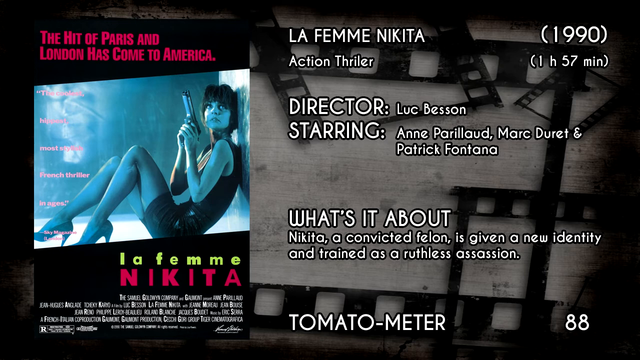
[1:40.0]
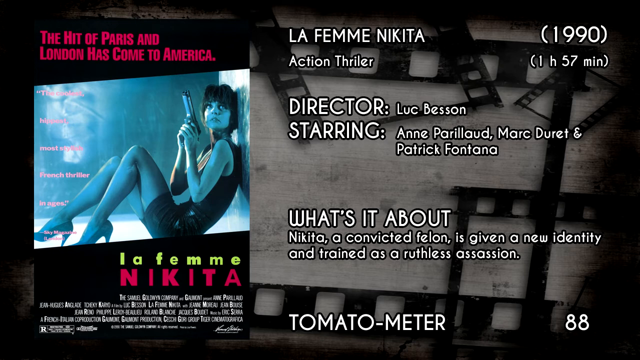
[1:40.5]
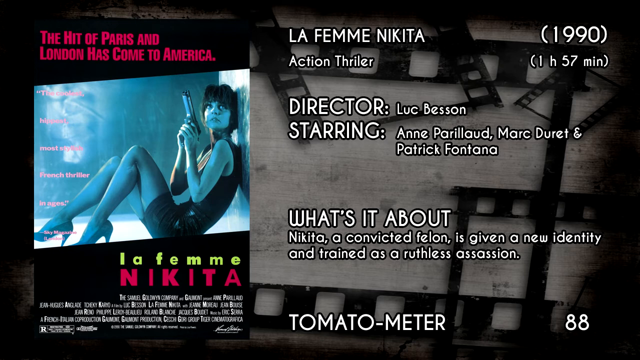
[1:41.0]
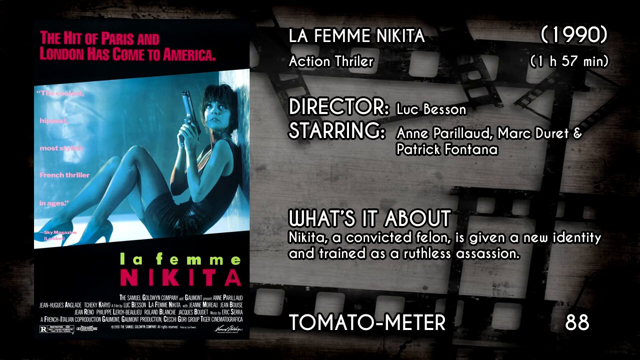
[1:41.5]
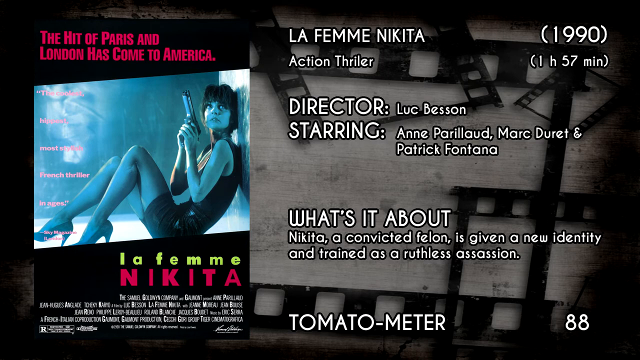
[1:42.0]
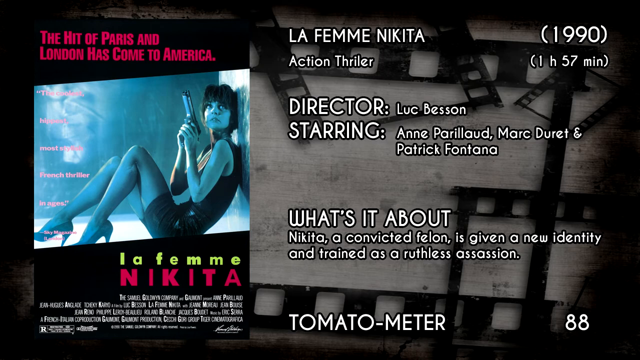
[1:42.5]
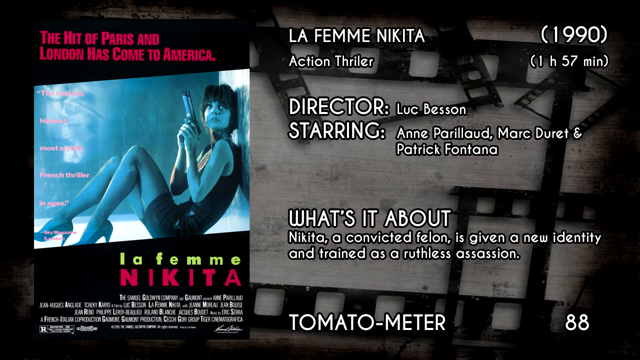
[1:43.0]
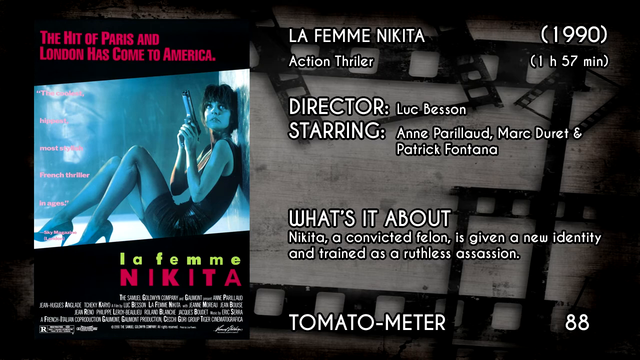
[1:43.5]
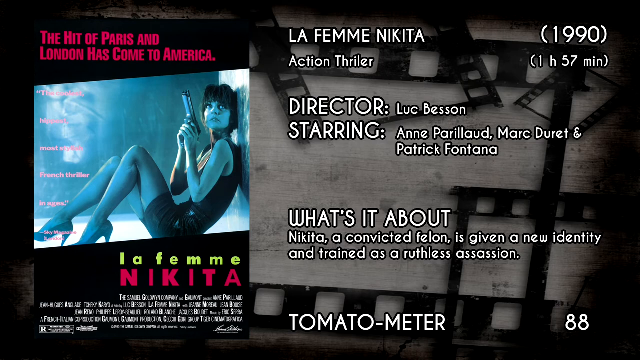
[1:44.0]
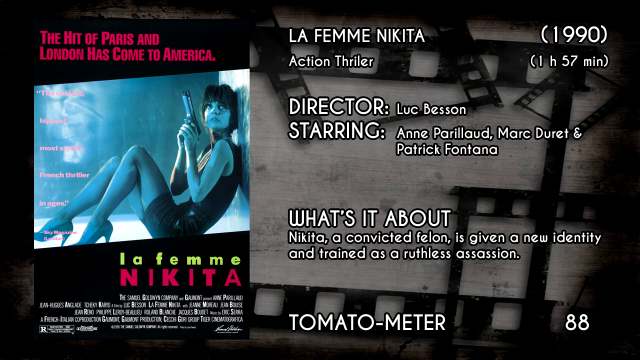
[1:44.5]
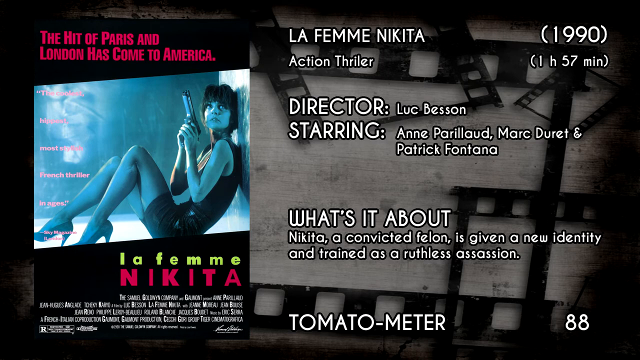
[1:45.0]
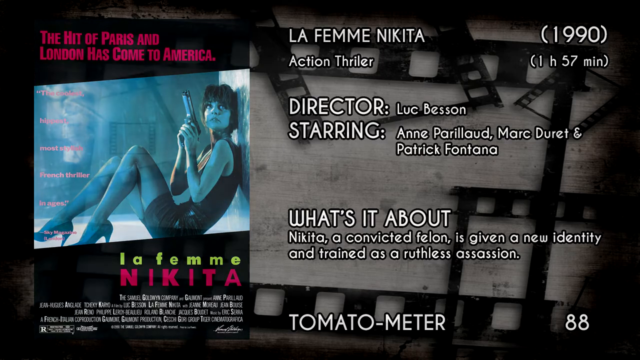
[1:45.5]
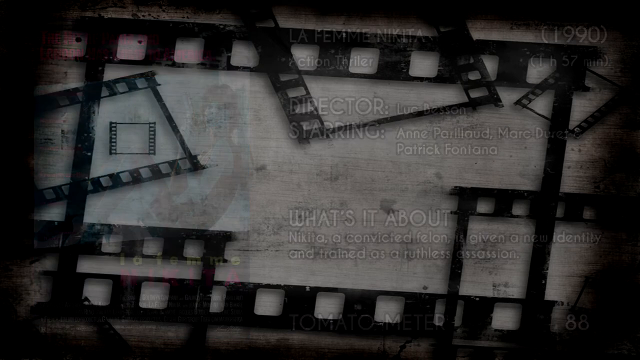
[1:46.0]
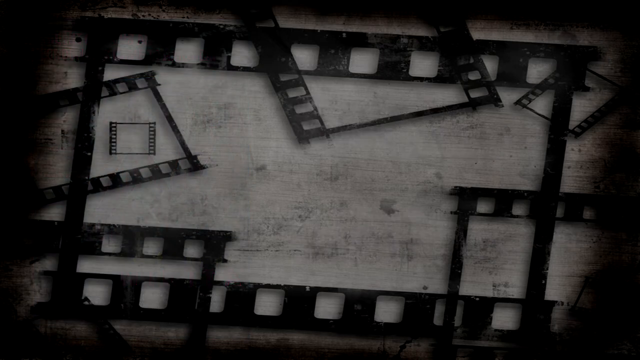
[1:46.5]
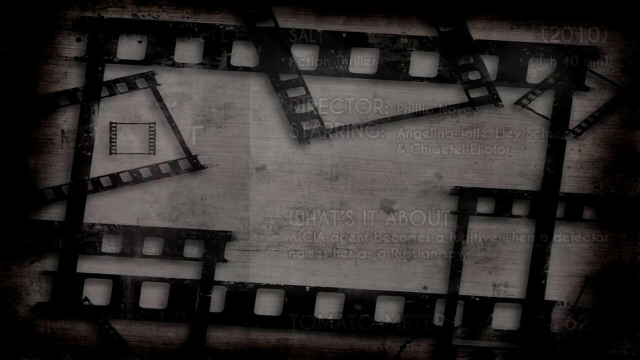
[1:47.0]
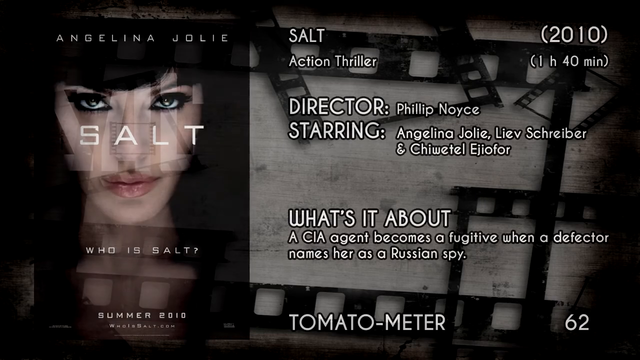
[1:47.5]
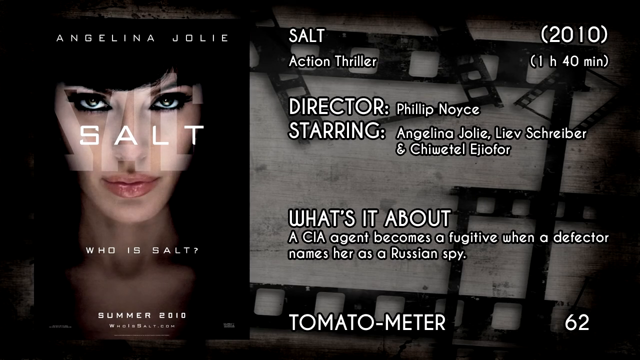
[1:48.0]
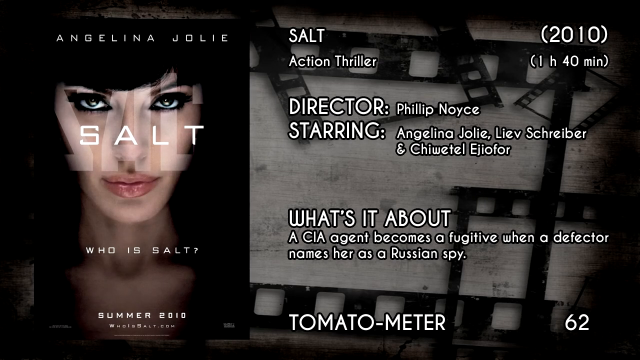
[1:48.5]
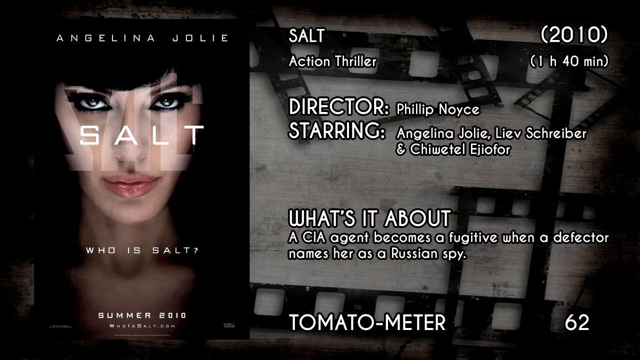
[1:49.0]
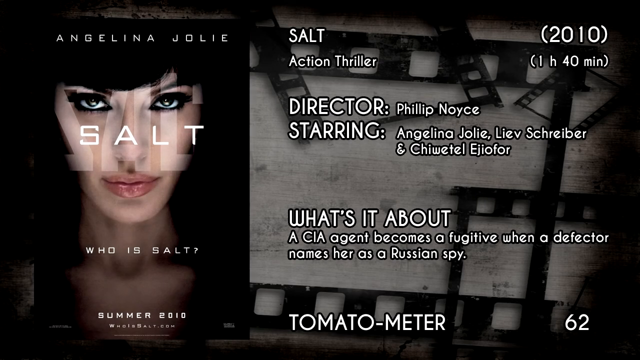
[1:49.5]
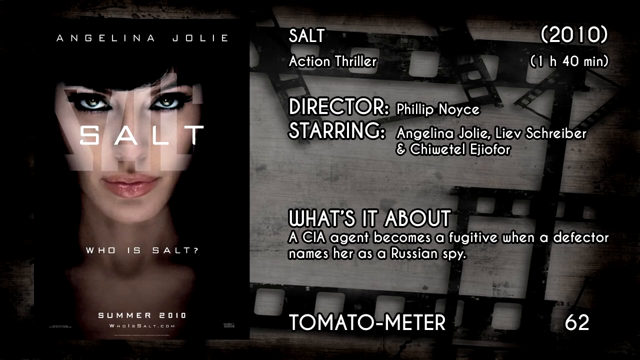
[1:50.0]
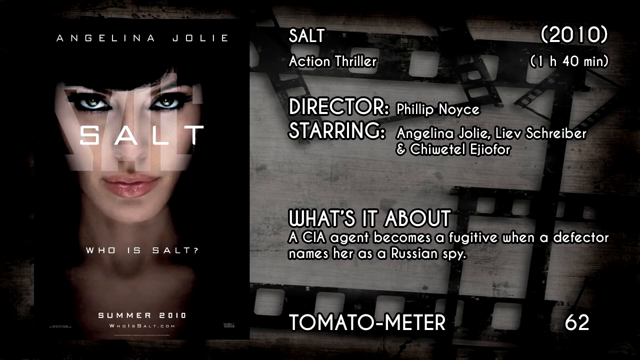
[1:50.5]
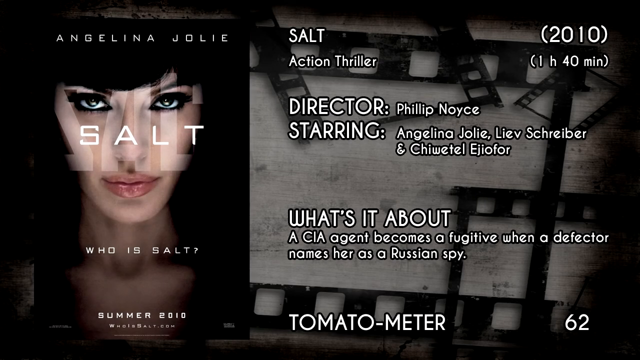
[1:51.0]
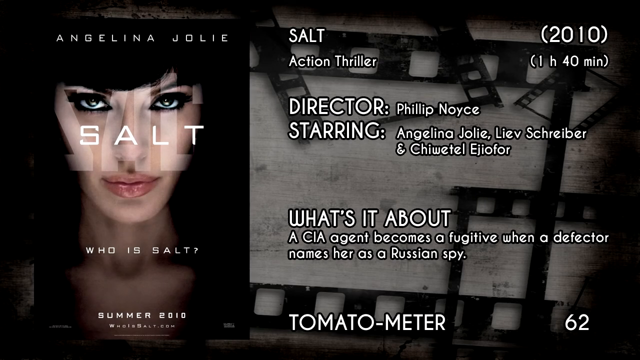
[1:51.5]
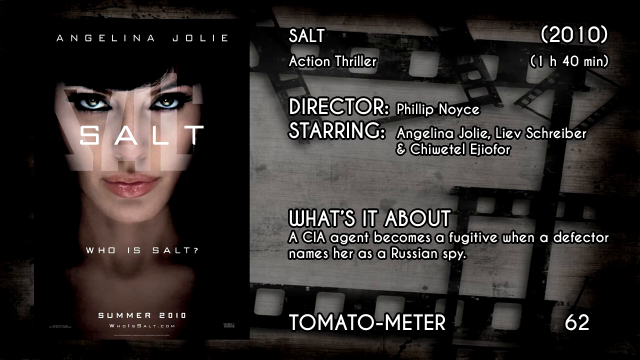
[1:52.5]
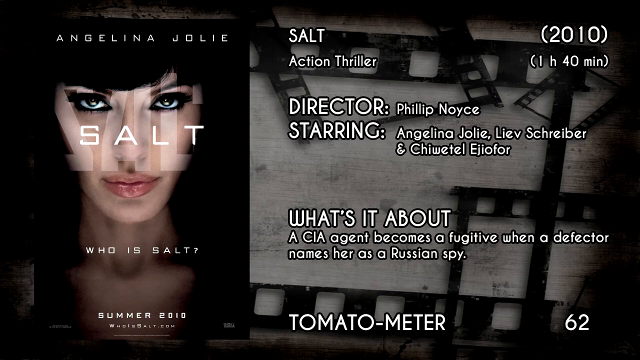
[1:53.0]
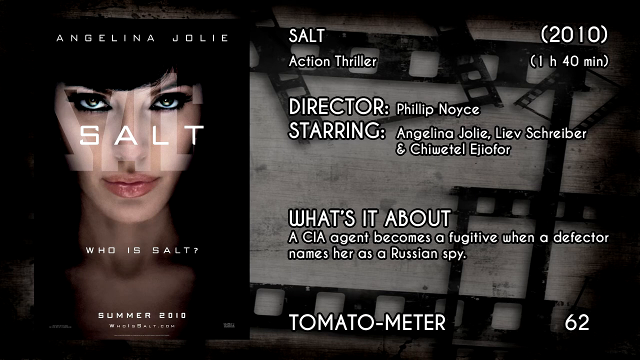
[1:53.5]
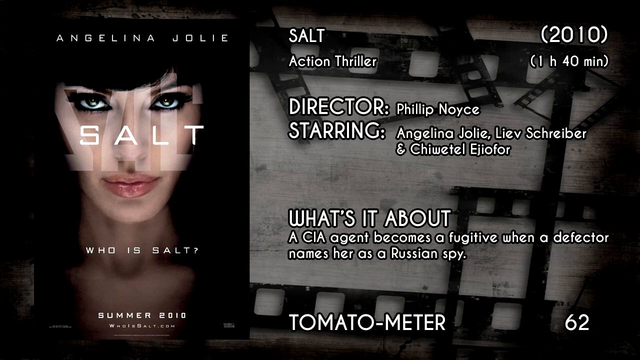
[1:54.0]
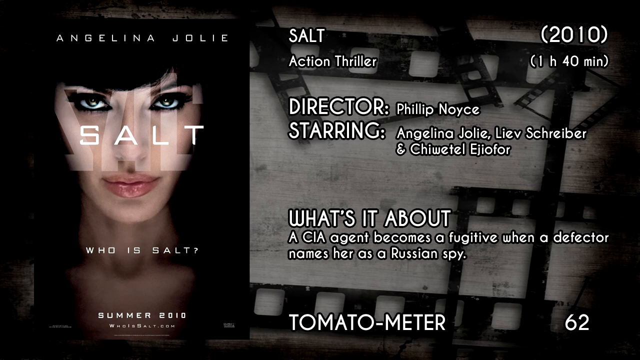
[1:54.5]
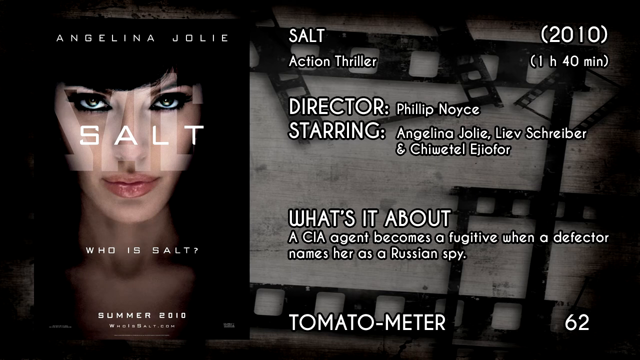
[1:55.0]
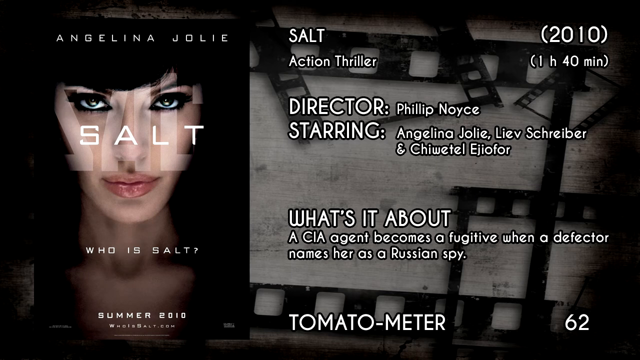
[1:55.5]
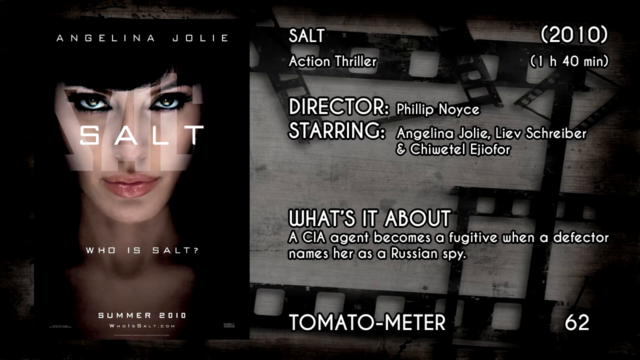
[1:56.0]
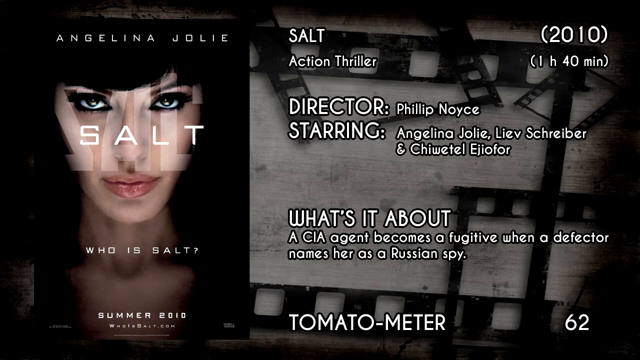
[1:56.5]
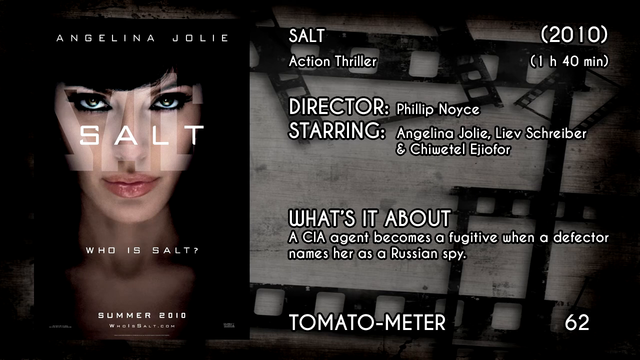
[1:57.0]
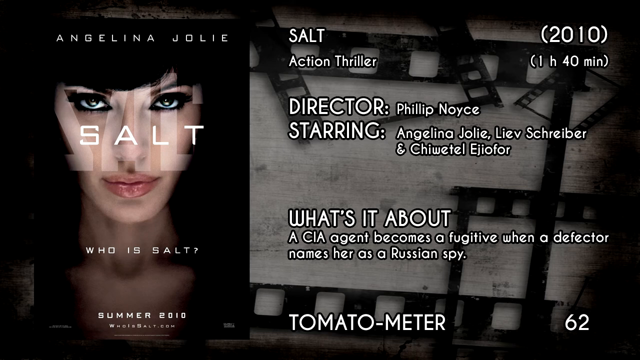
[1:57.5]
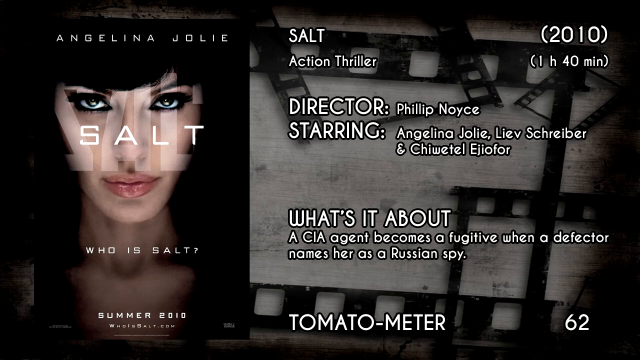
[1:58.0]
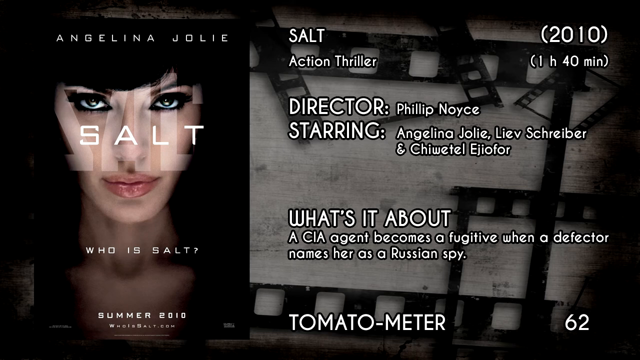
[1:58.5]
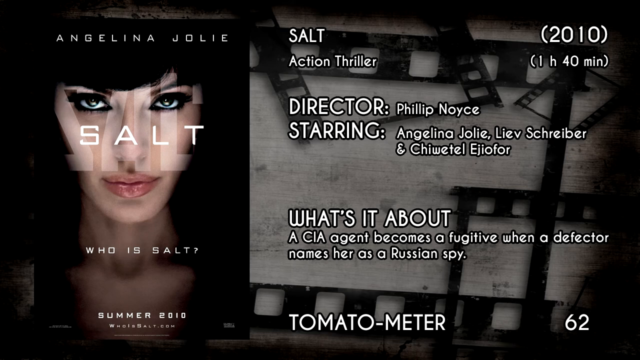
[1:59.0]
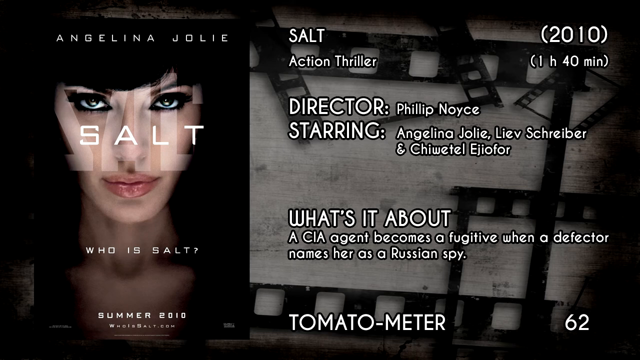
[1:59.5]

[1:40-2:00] The Le Femme Nikita page stays up for a little while, then a new movie appears: Salt, action thriller, 2010, 1 hour 40 minutes, director Philip Noyce, starring Angelina Jolie, Leah Schreiber and Shiwetel Ejuofor. The synopsis describes an agent who becomes a fugitive when a defector names her as a Russian spy. The Tomato Meter rating is 62. The poster on the left shows Angelina Jolie's name at the top and her face, with the word "salt" written on her face; below, on her neck, it says "who is salt", and "summer 2010" appears at the bottom. Only Angelina Jolie is on the poster.